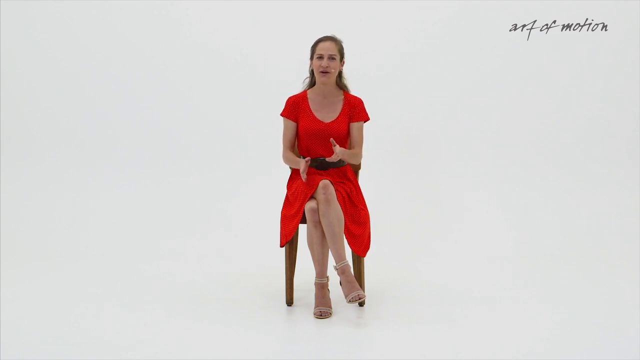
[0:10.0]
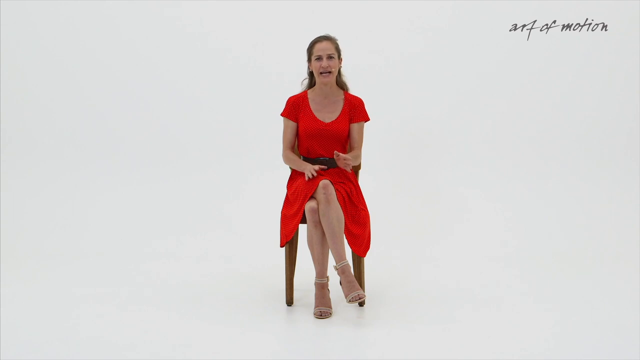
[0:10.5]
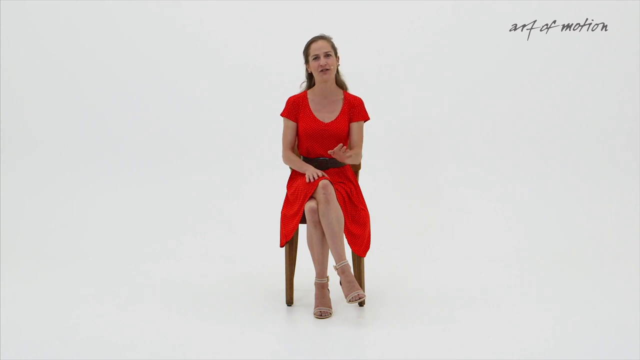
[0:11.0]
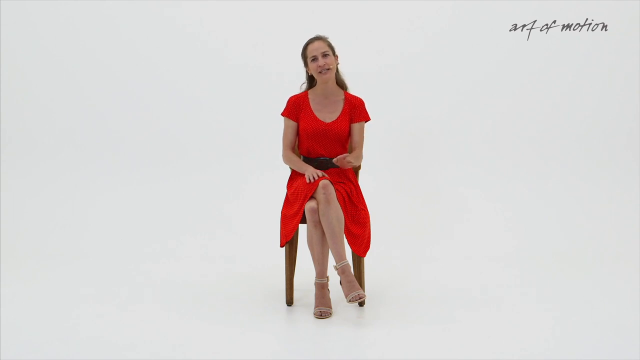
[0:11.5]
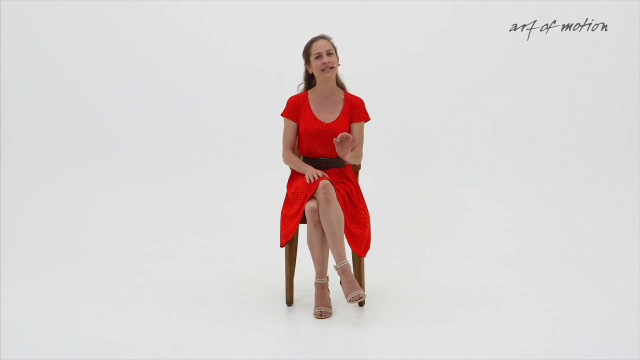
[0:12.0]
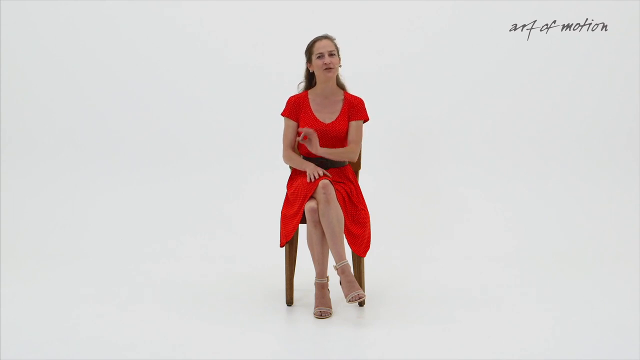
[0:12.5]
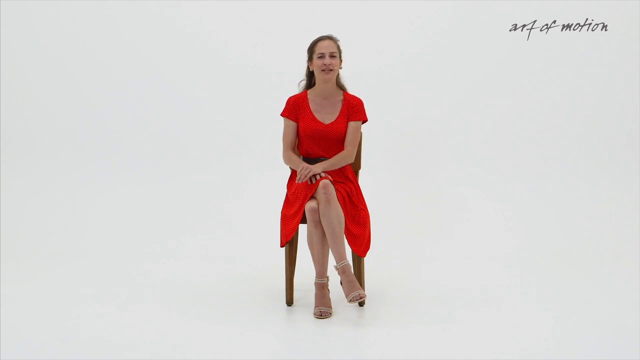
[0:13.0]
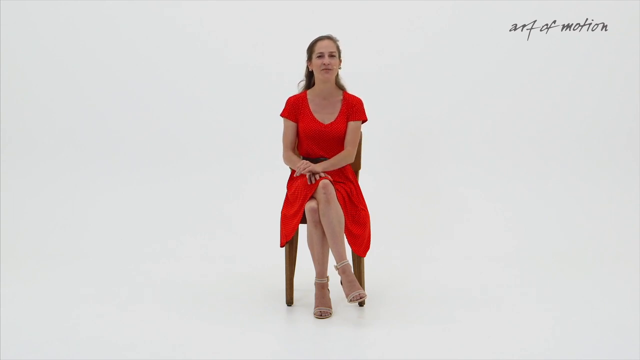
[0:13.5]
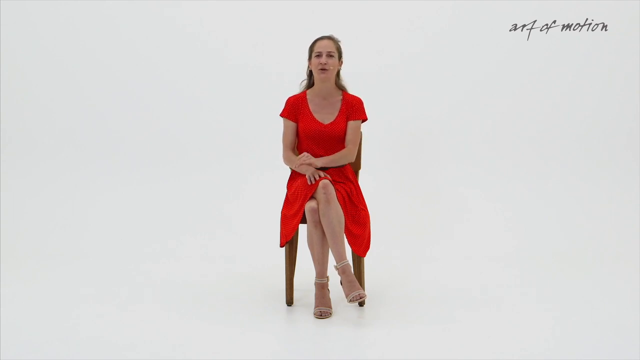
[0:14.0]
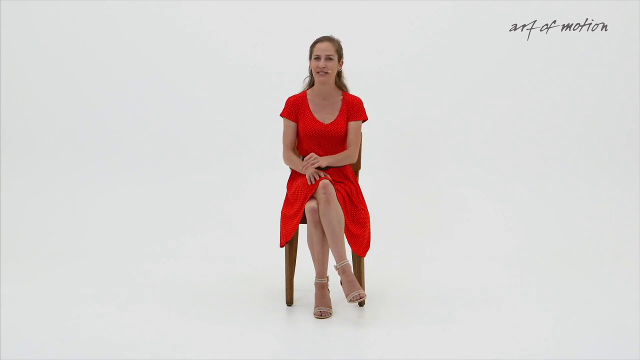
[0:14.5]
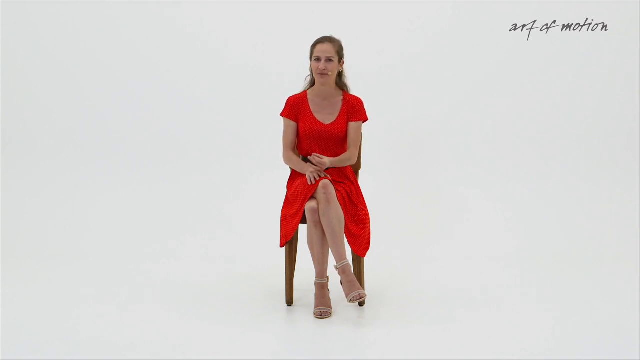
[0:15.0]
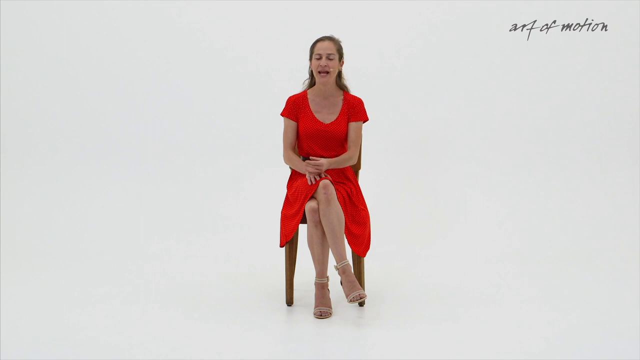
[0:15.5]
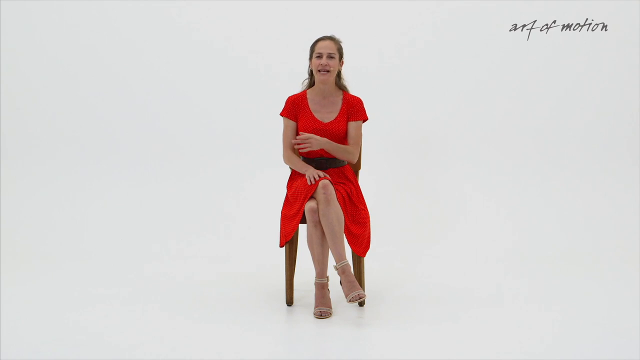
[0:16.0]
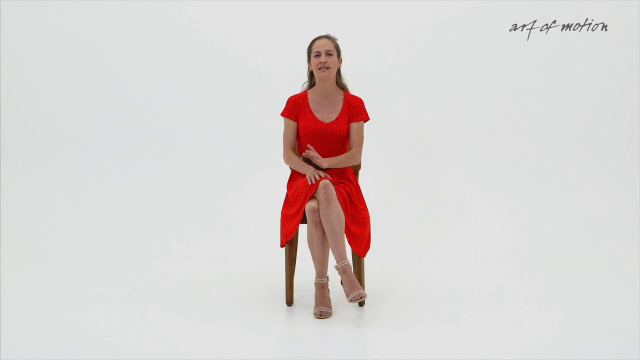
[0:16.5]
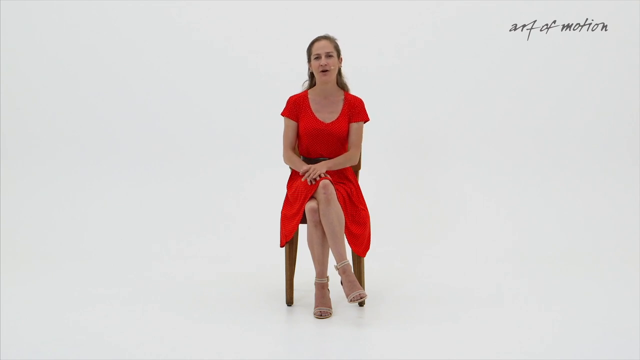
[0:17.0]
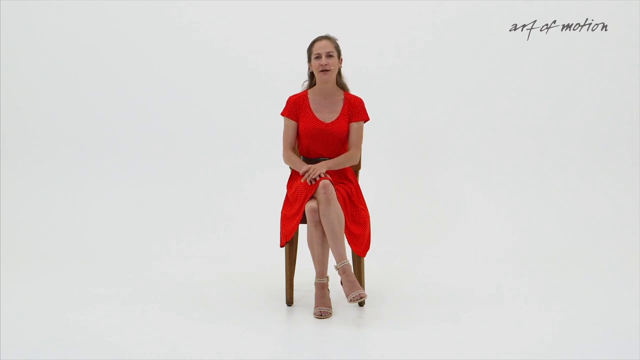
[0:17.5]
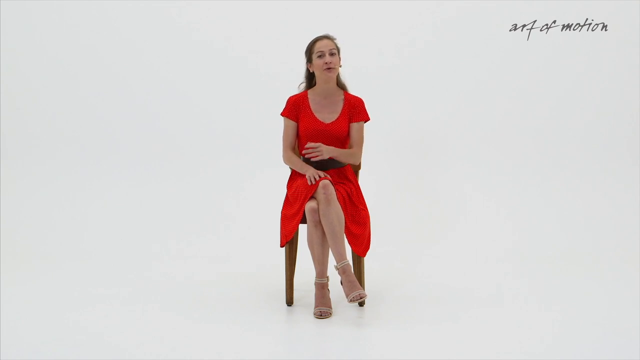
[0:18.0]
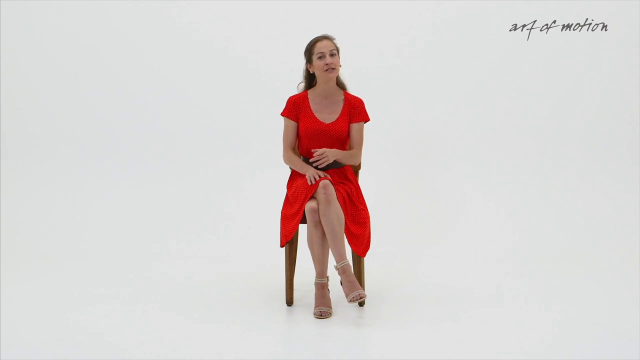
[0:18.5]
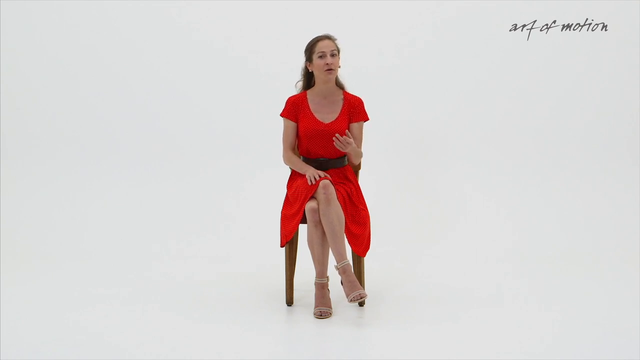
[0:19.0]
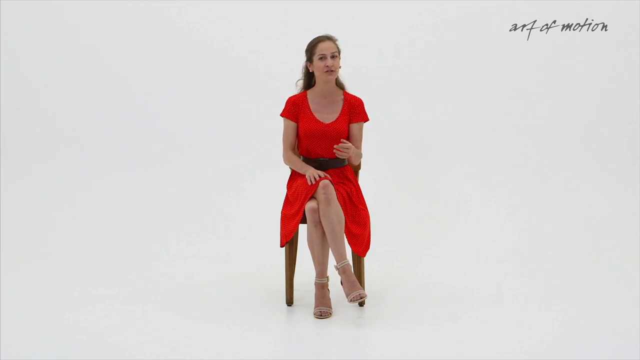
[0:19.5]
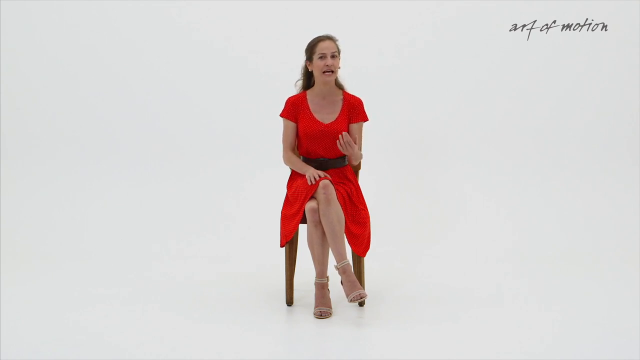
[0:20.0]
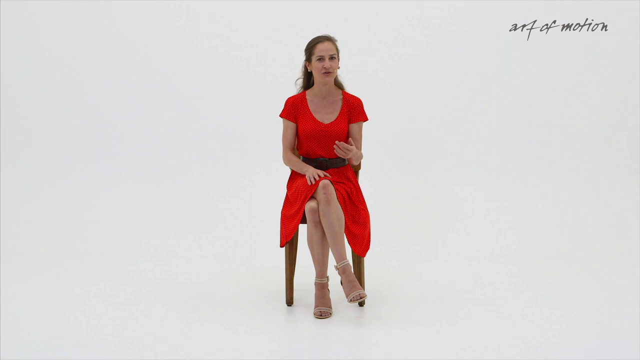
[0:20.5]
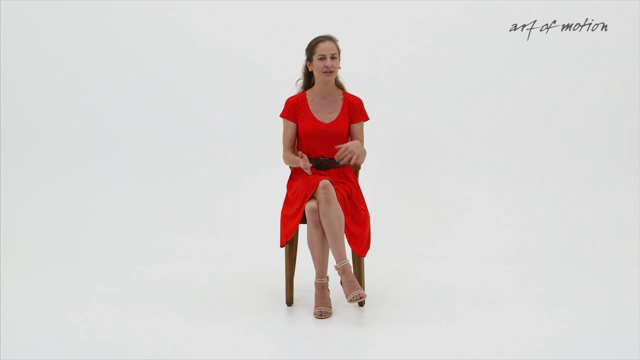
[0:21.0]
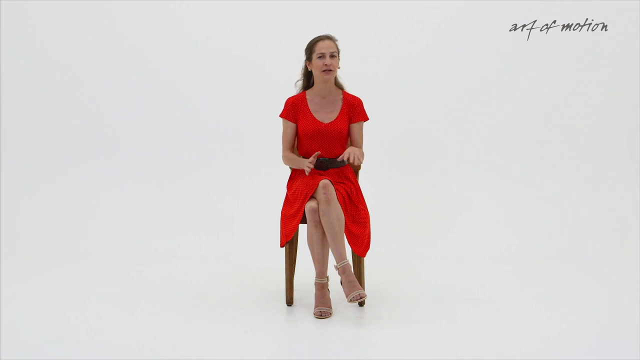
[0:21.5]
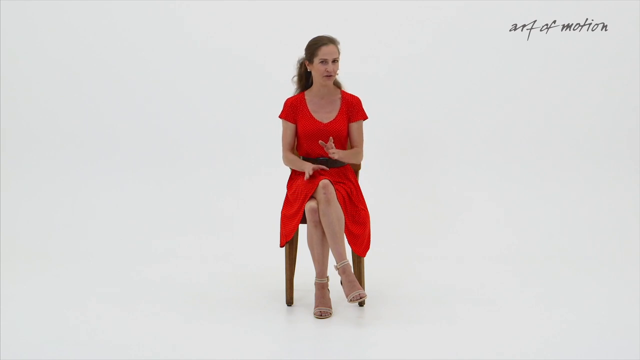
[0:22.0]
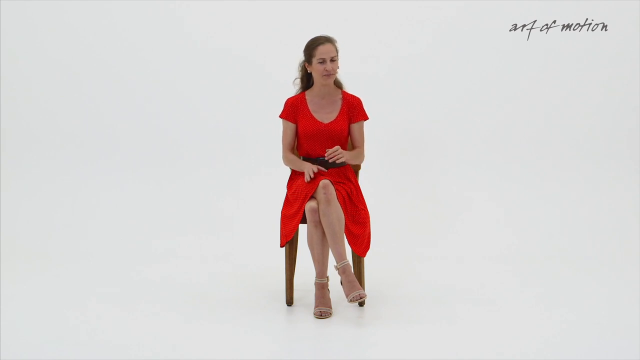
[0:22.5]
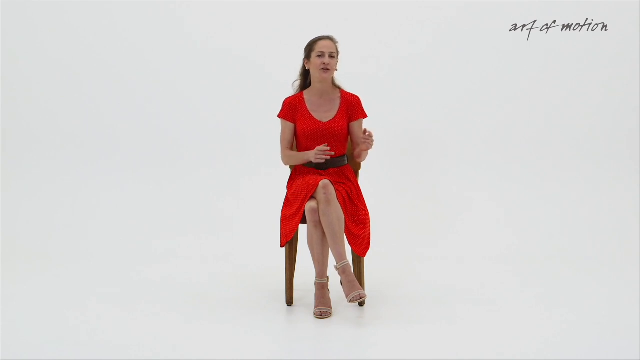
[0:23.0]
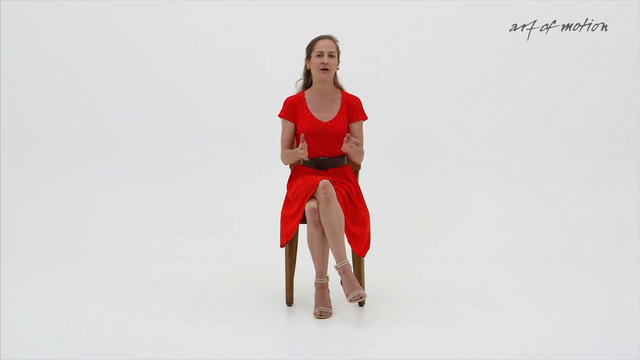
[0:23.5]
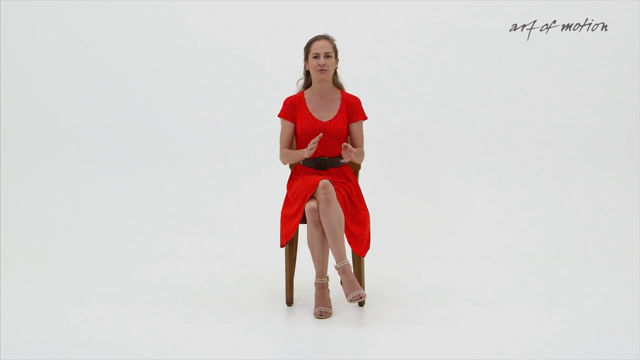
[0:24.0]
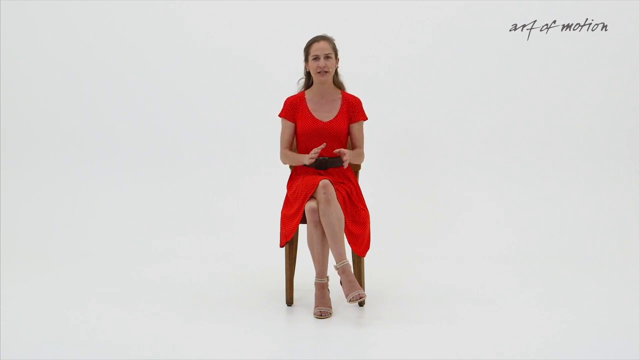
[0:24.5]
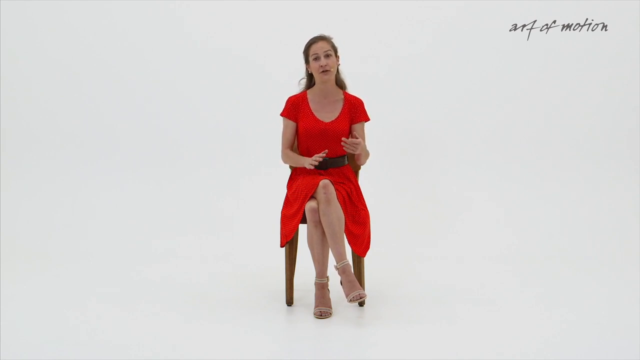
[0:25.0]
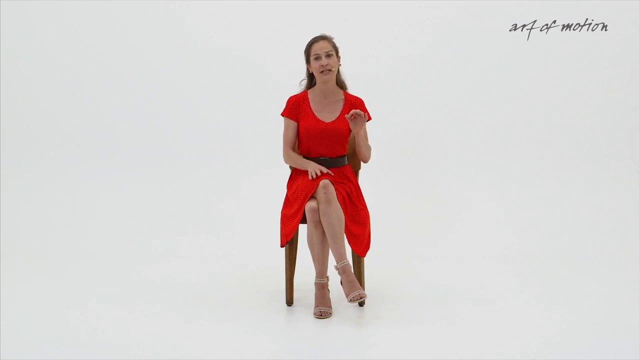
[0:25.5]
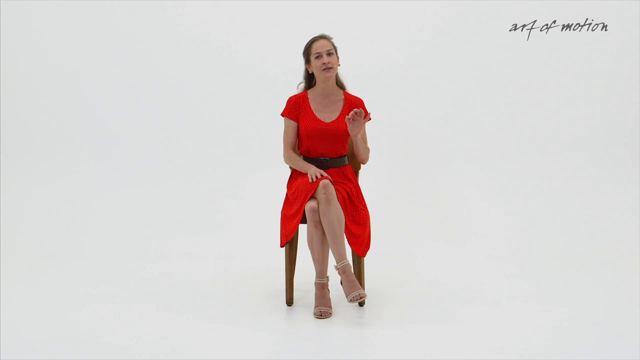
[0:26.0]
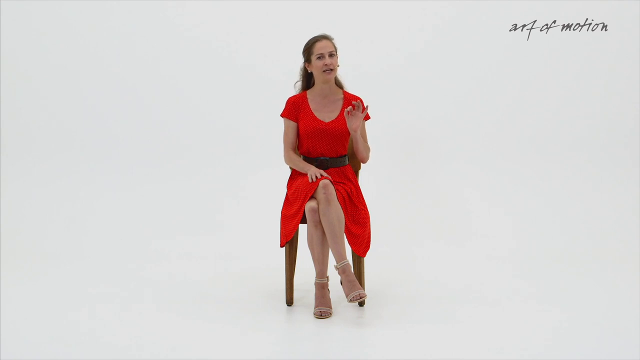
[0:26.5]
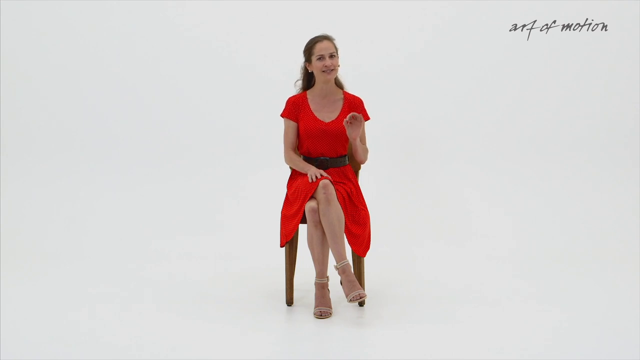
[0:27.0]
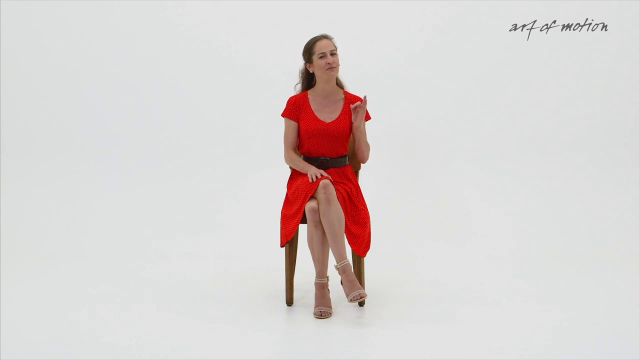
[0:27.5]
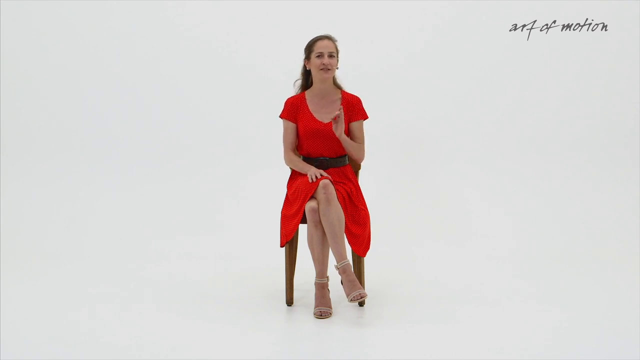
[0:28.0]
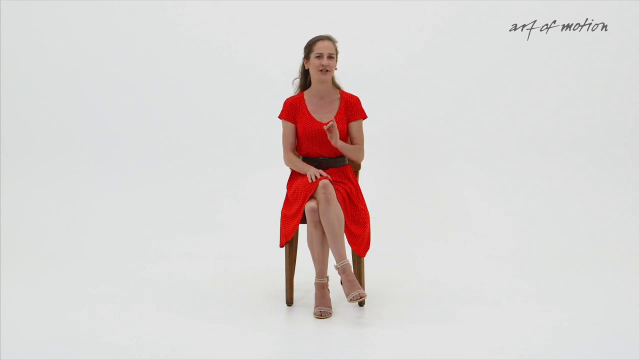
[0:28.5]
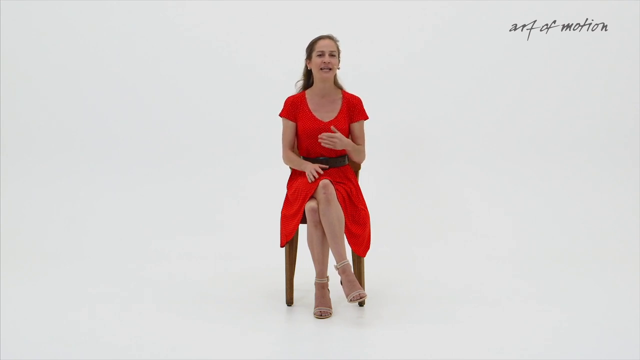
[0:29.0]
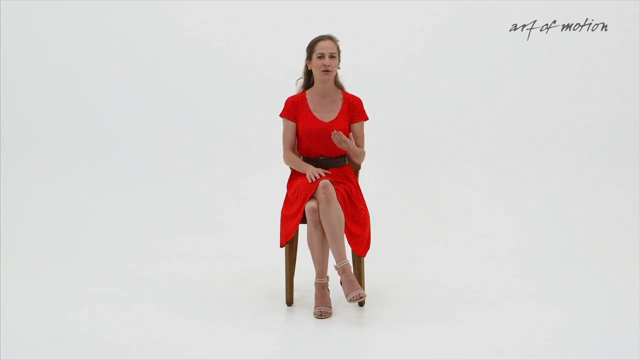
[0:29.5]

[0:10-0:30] In the upper right-hand corner of the frame, stylized script-type writing reads "The Art of Motion"; it stays there as long as the woman in red is speaking in the scene. Her right hand remains on her lap while her left hand lifts from her lap to gesture as she speaks, its palm slightly visible. Her left hand then moves above her lap with the palm slightly down, moving downward to emphasize her point, never going higher than her stomach, and returns on top of her right hand, which has stayed on her lap. She keeps talking and raises her left hand again, this time turning it over to expose the palm, bringing it up with each point and then back down. She then talks with both hands off her lap, palms visible, no higher than her chest. Afterward she places her right hand back on her lap and continues gesturing with her left hand at about chest height.